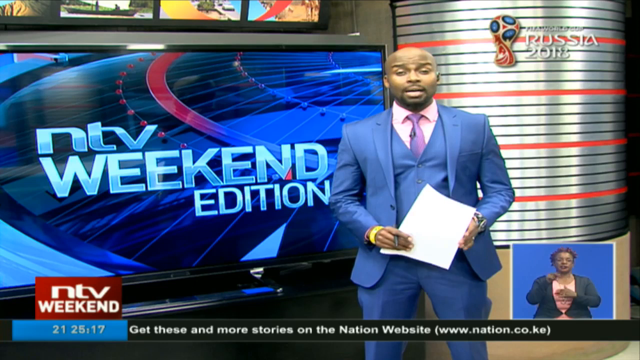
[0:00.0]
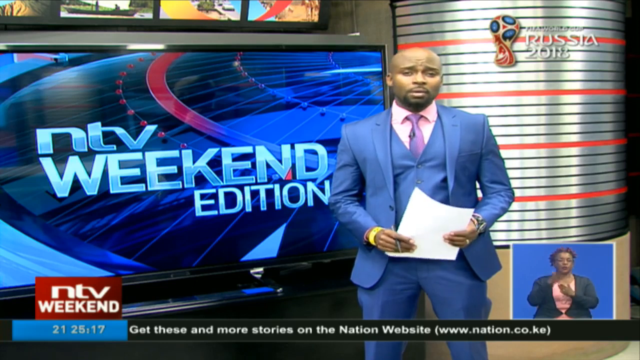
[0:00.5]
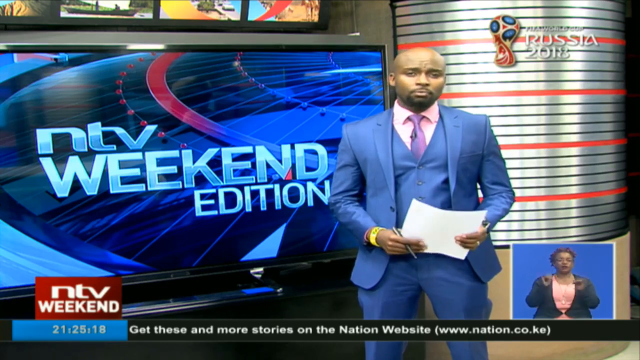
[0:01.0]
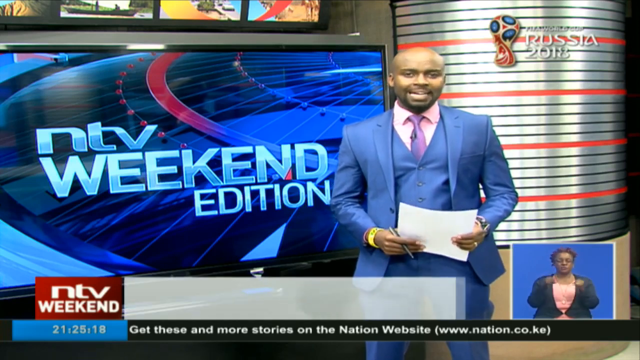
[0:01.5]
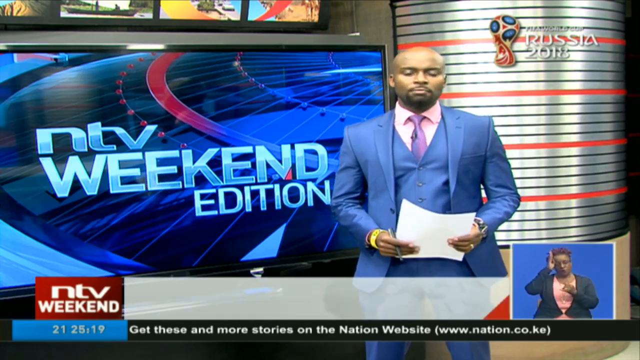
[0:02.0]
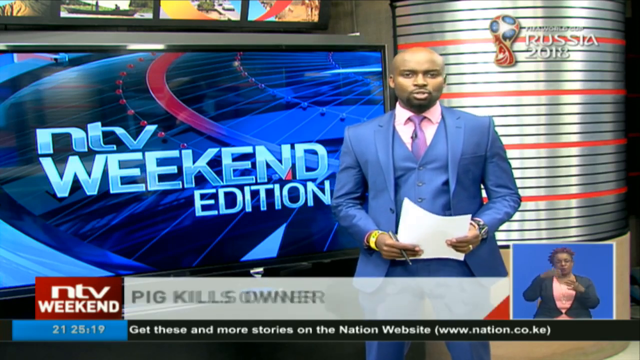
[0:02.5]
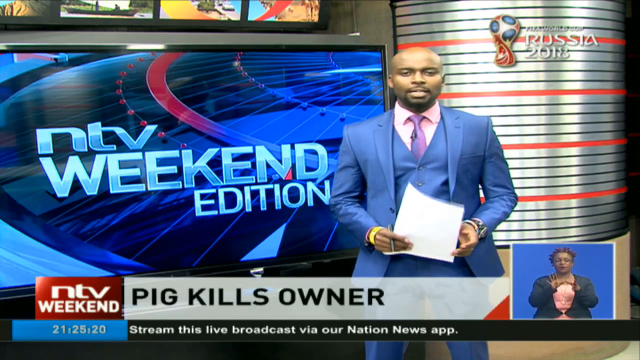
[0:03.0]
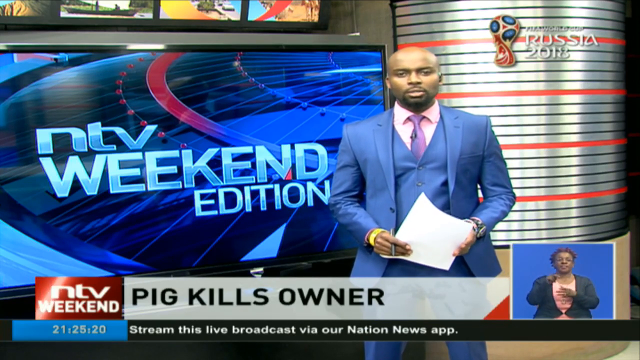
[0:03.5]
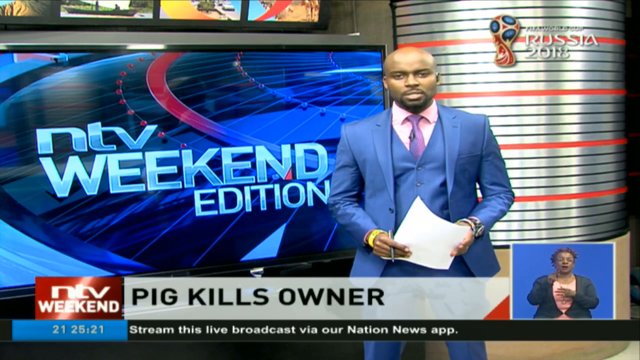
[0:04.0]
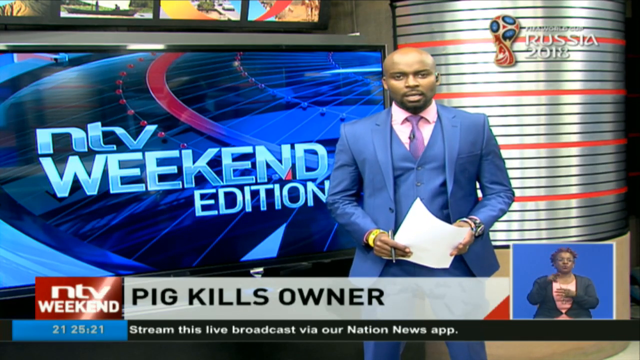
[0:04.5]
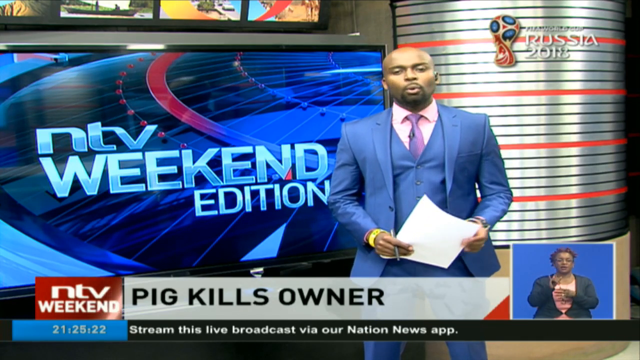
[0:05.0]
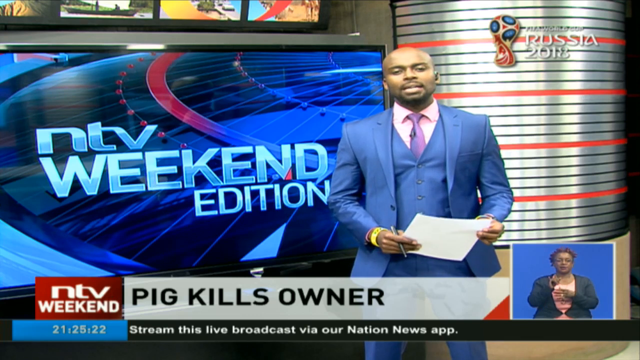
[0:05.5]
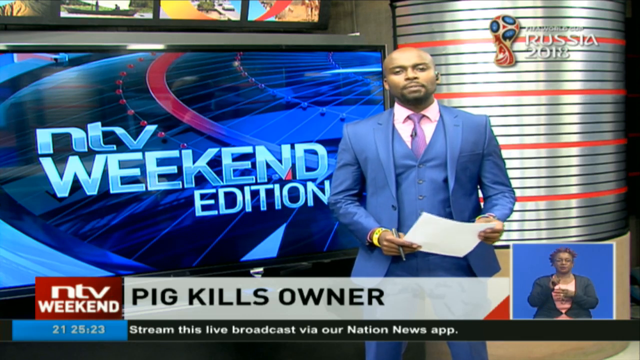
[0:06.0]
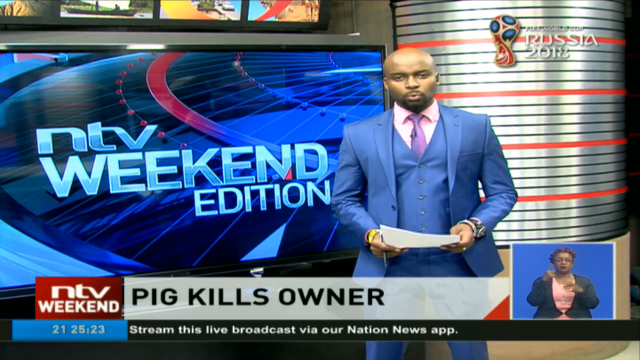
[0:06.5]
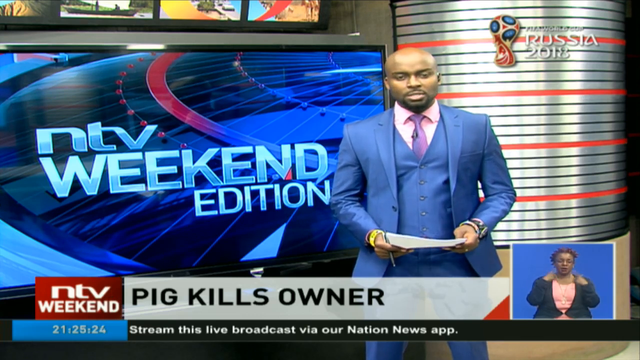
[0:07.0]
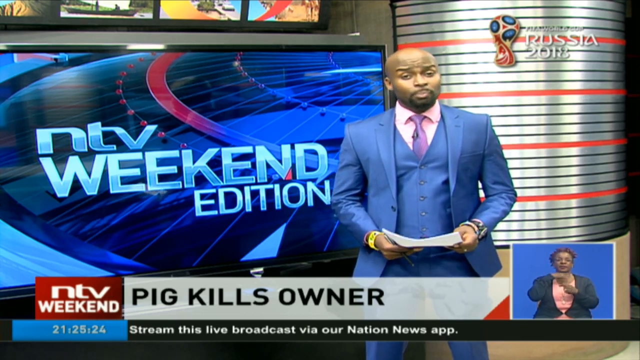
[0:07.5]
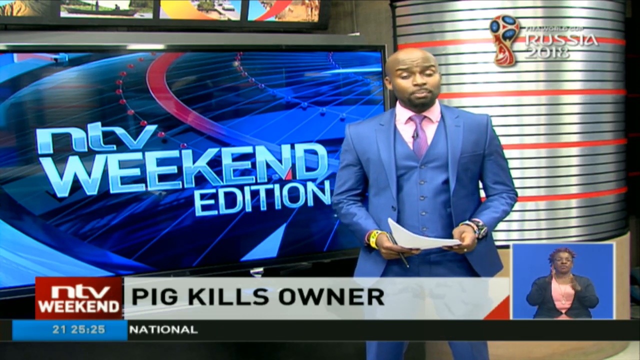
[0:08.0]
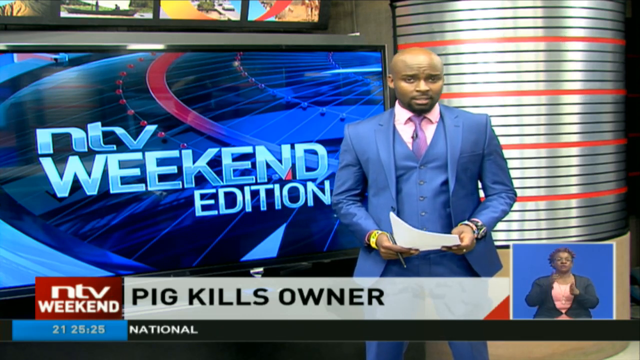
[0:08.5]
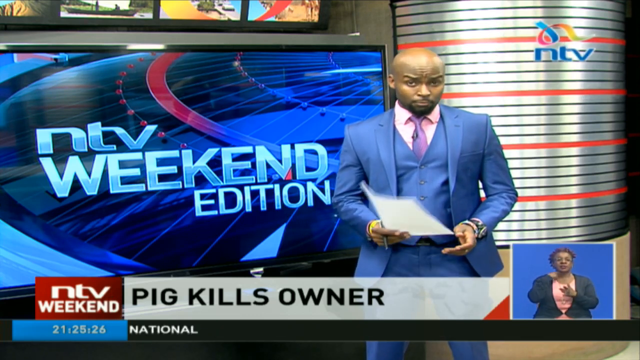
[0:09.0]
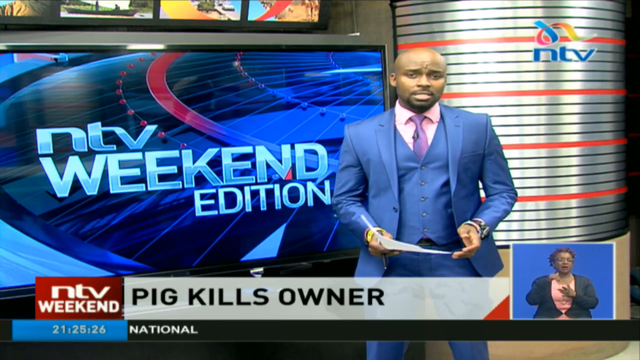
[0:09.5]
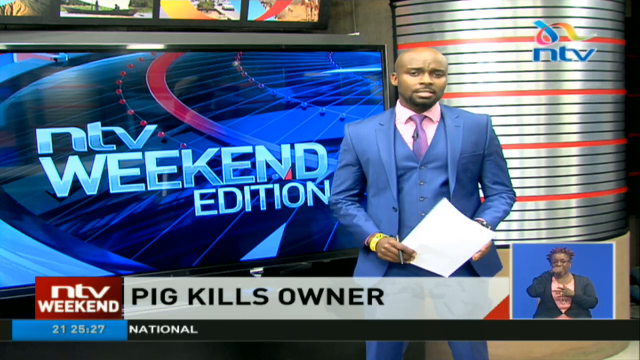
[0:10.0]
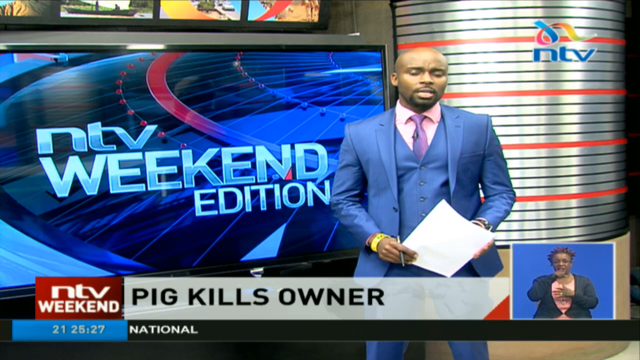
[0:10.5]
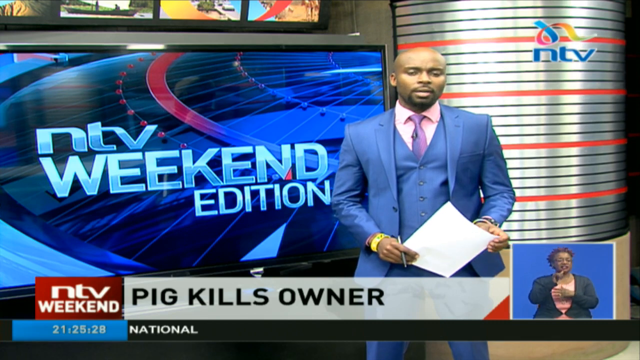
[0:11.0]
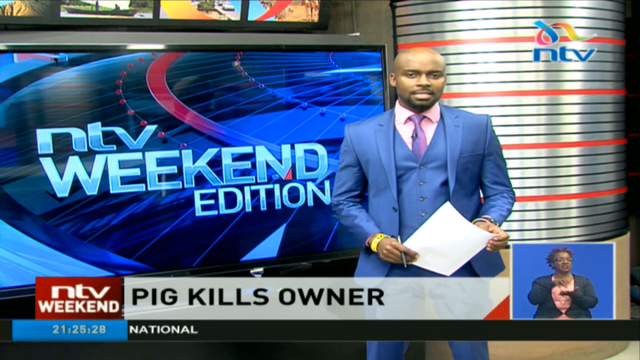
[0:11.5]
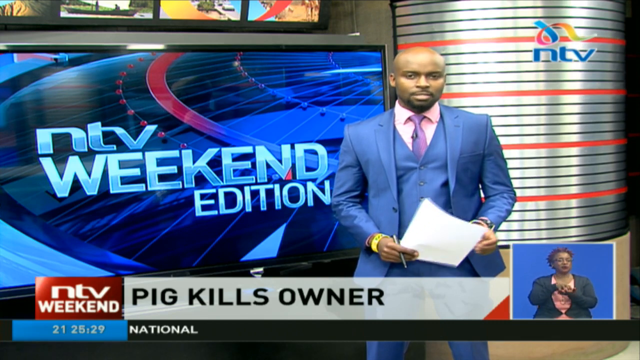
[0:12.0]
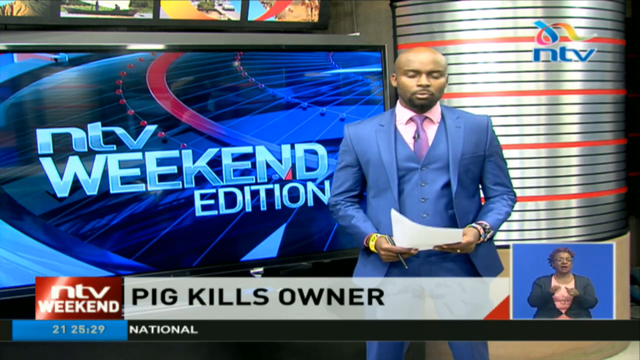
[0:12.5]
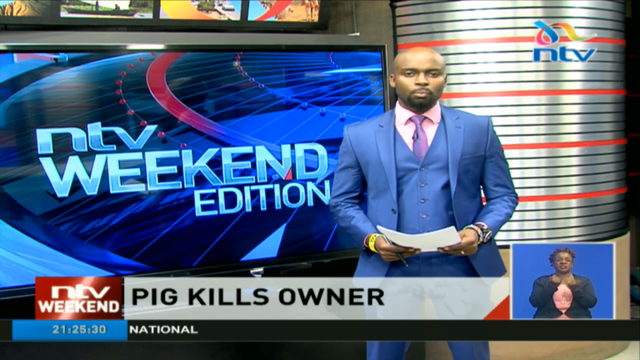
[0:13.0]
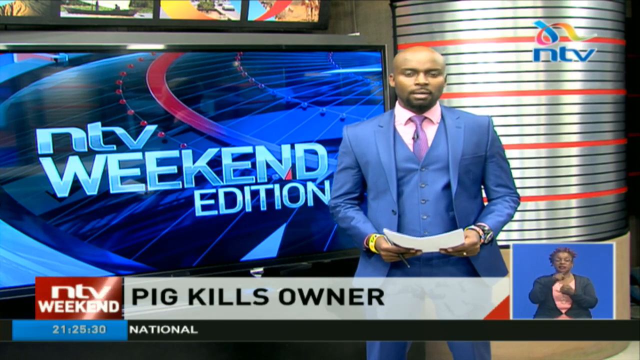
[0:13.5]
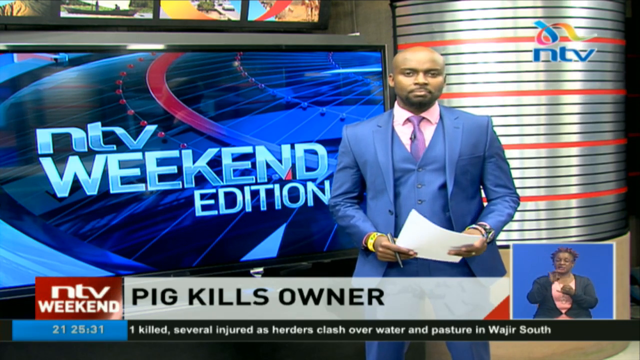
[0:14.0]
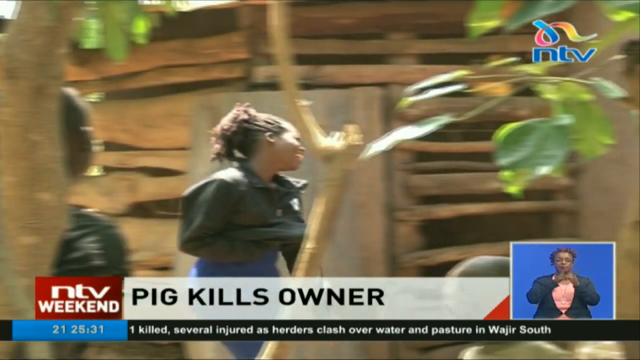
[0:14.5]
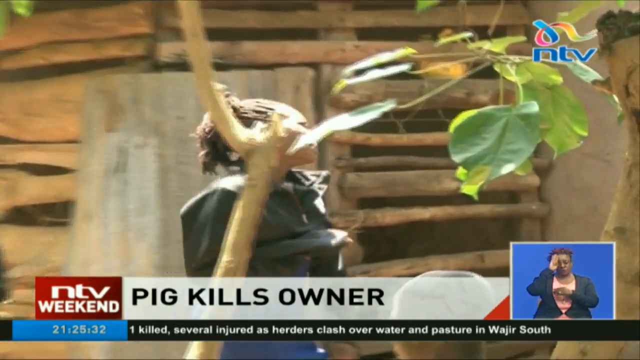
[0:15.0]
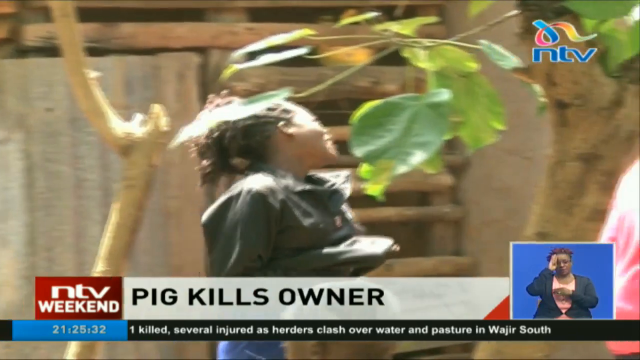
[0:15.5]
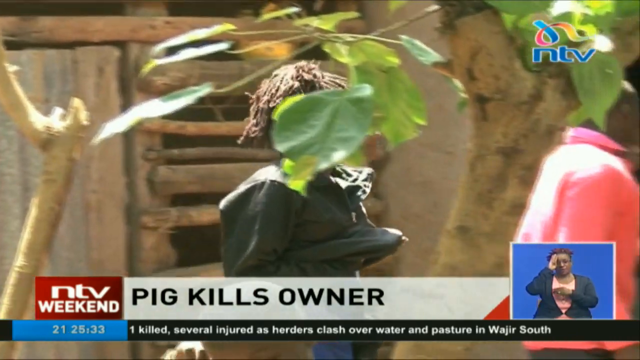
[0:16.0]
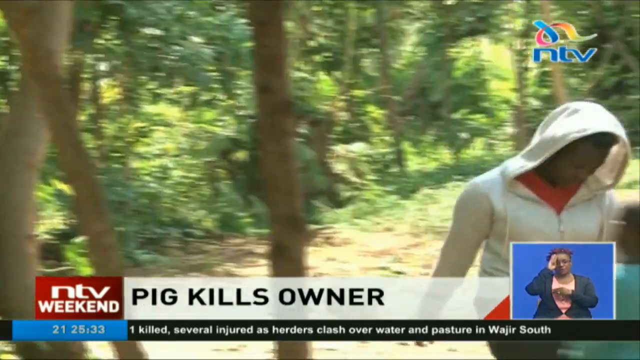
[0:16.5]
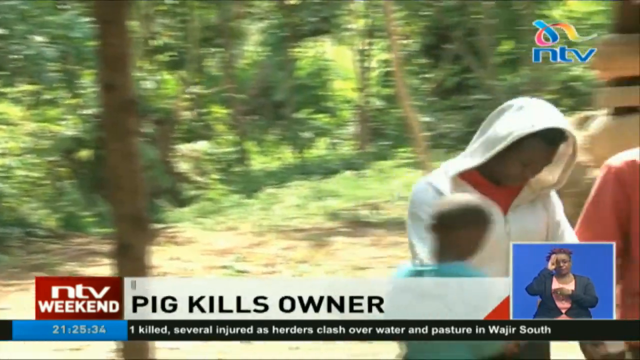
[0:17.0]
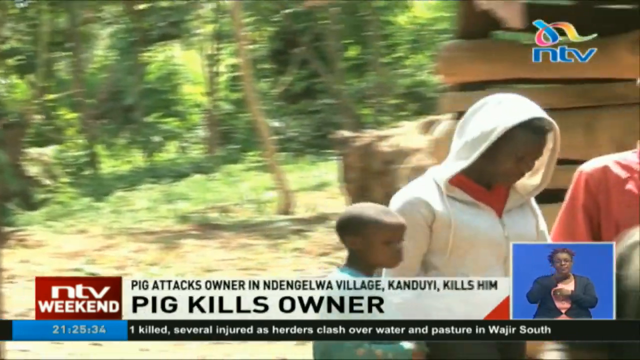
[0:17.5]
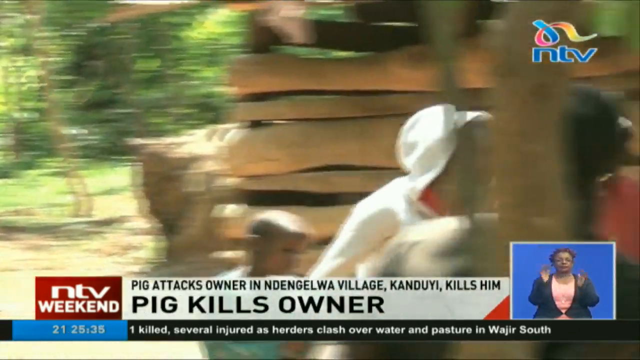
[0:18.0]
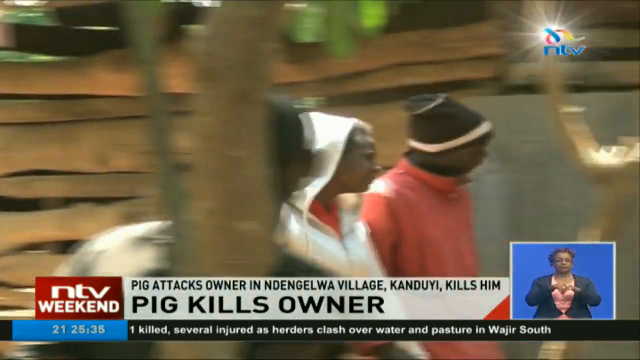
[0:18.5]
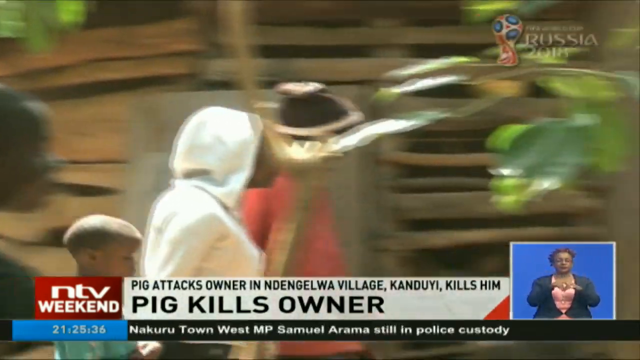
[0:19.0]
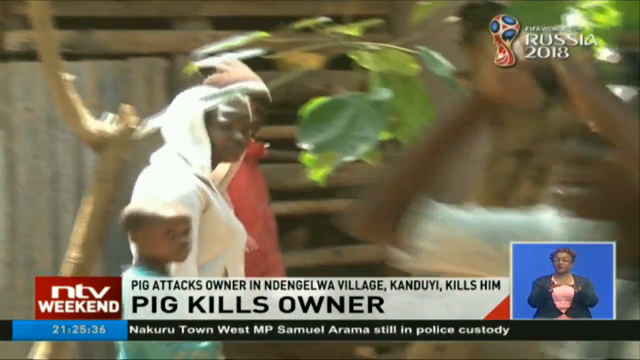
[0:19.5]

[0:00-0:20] The video appears to be a weekend edition of a news bulletin. It is presented by a handsome black man wearing a light blue suit with a pink shirt and a light purple tie. Behind him in the newsroom is a big screen where the show's content appears, and on another part of the background there seems to be a big silver tank, white with red stripes. In the bottom right corner, a lady interprets in sign language; she wears a black blazer with a light pink top and uses her hands to sign. The headline reads "Pig kills owner" in black capital letters.